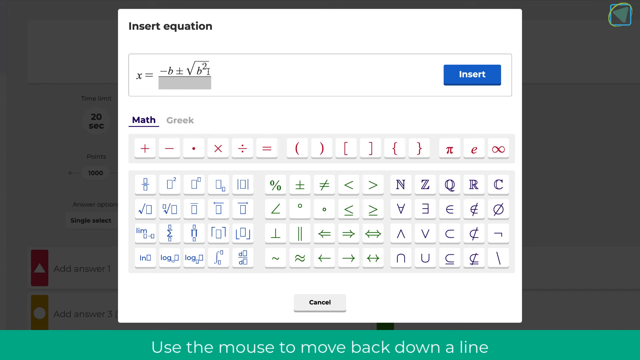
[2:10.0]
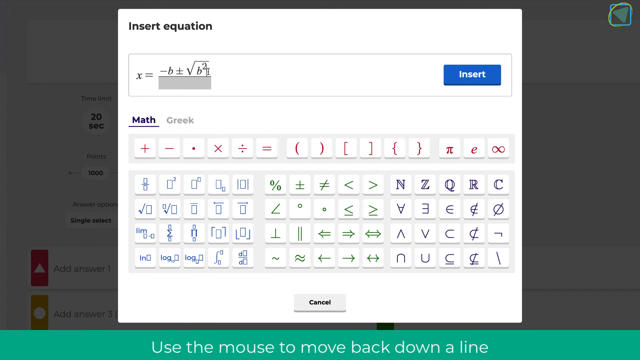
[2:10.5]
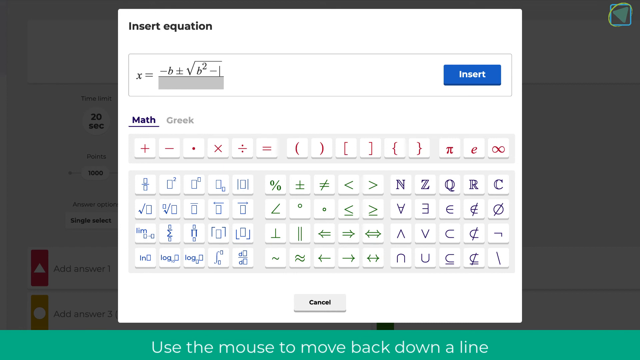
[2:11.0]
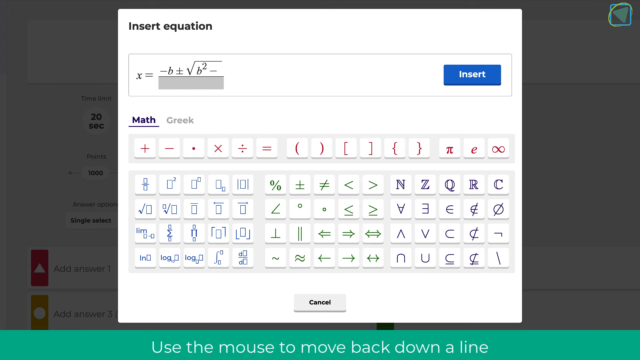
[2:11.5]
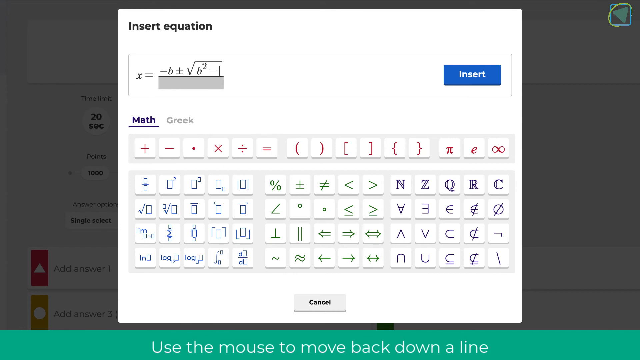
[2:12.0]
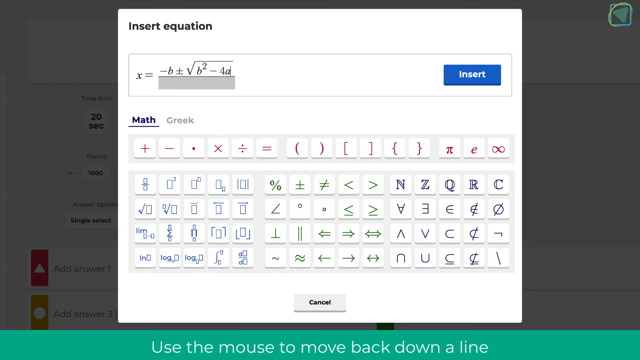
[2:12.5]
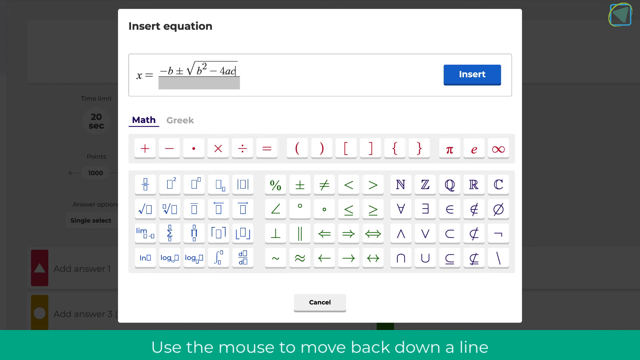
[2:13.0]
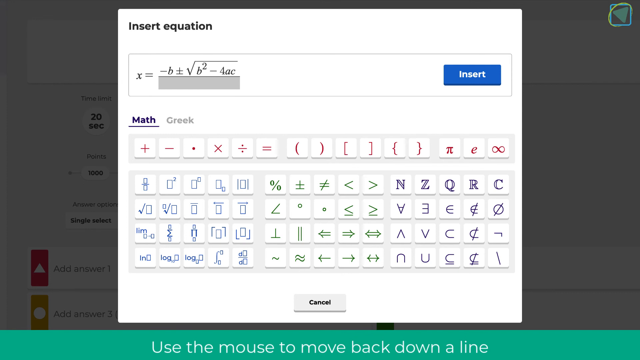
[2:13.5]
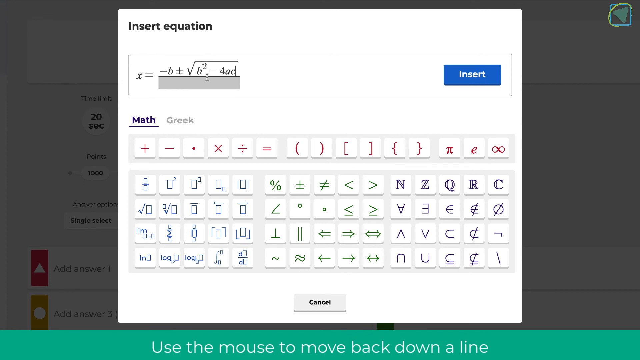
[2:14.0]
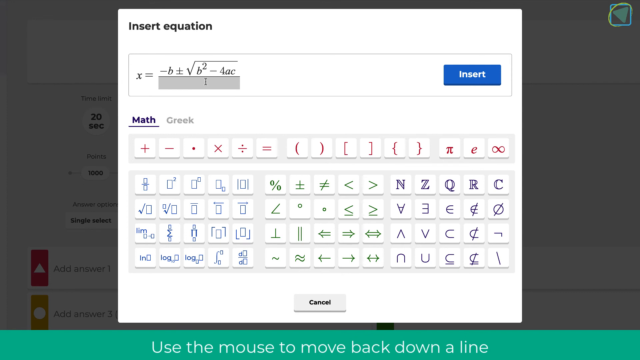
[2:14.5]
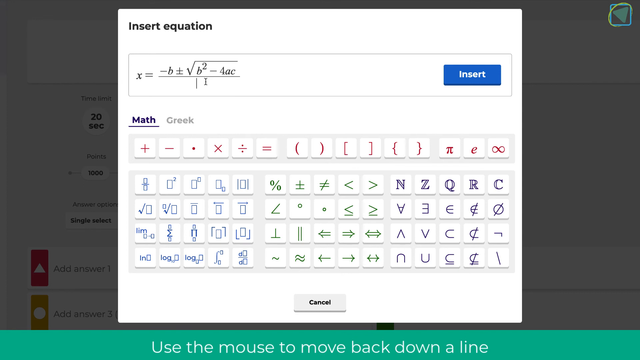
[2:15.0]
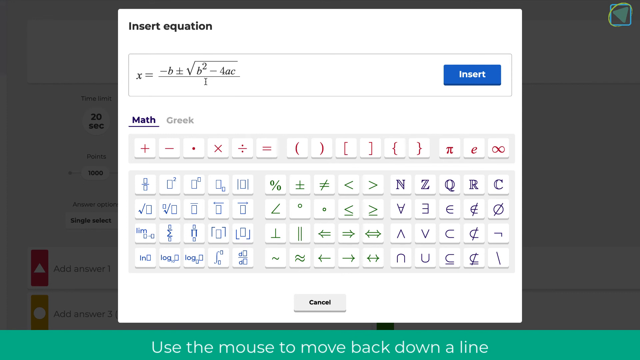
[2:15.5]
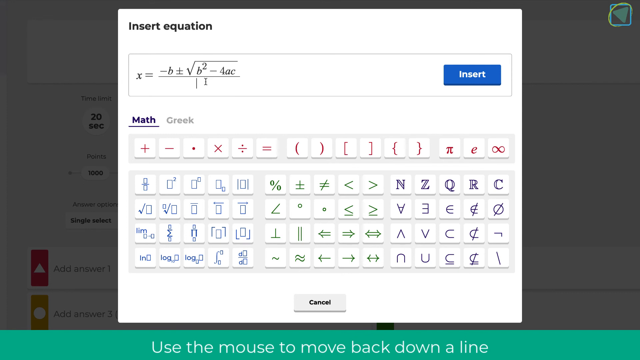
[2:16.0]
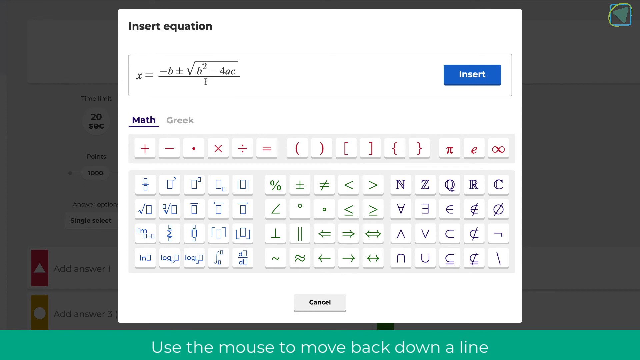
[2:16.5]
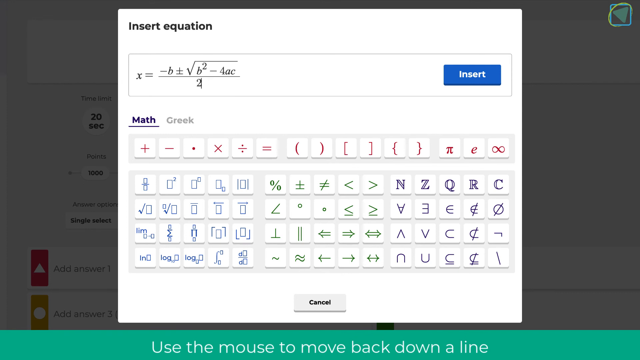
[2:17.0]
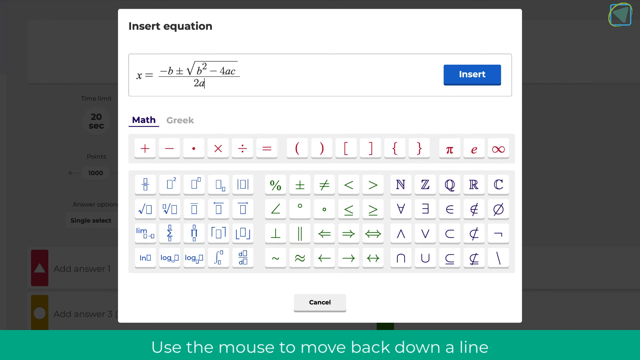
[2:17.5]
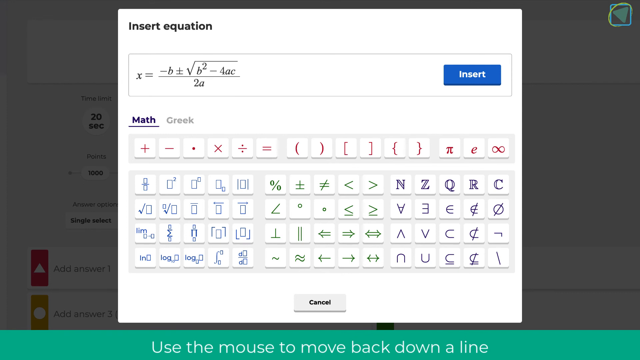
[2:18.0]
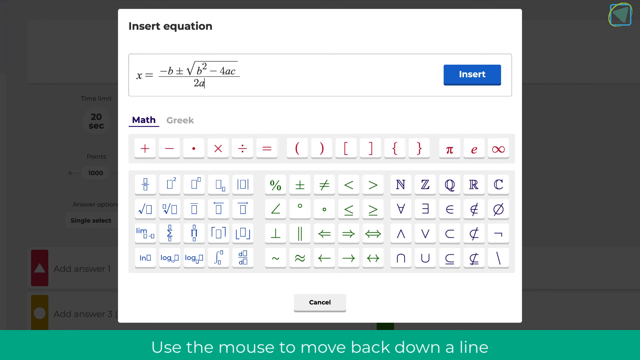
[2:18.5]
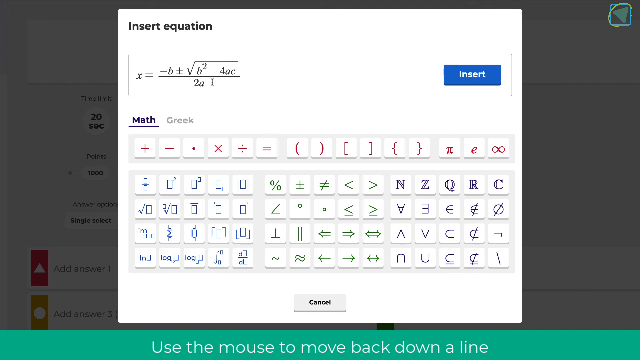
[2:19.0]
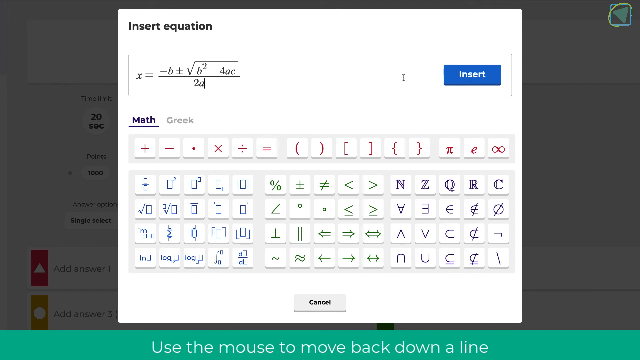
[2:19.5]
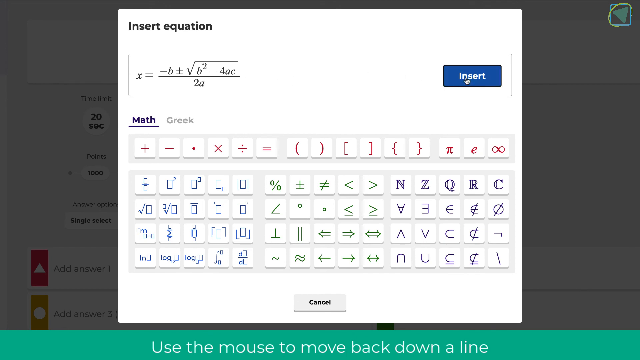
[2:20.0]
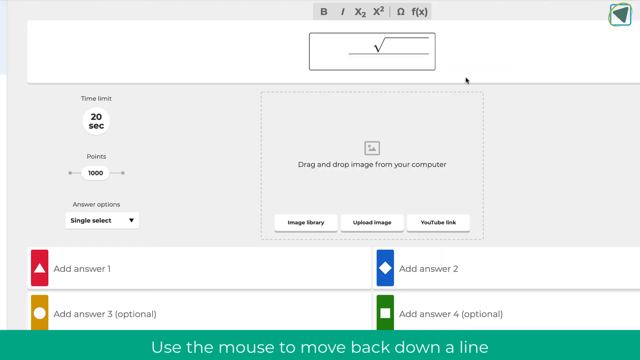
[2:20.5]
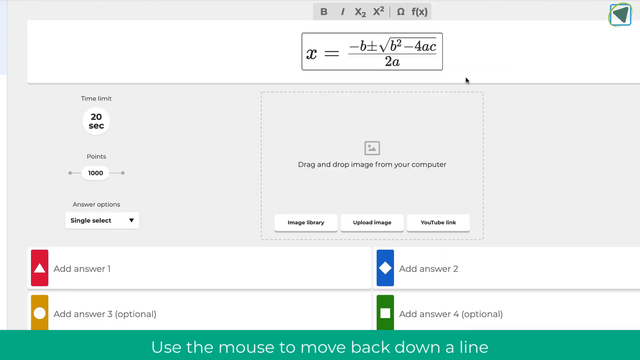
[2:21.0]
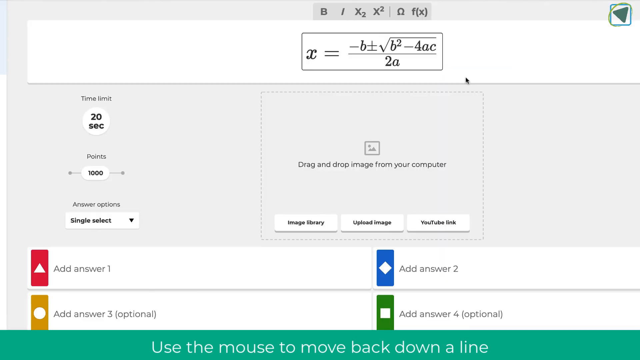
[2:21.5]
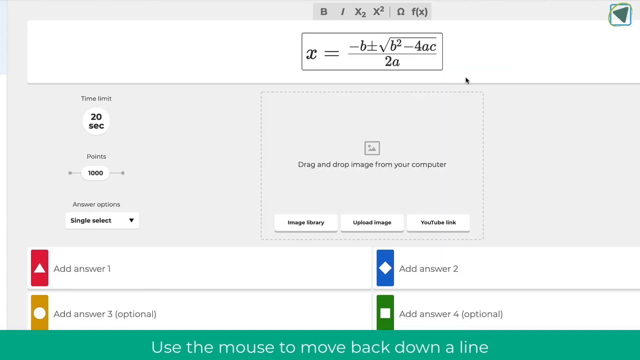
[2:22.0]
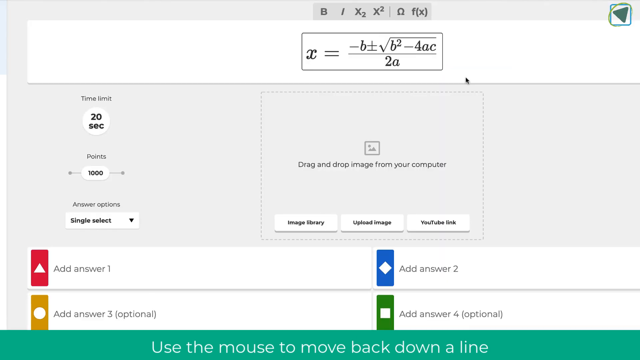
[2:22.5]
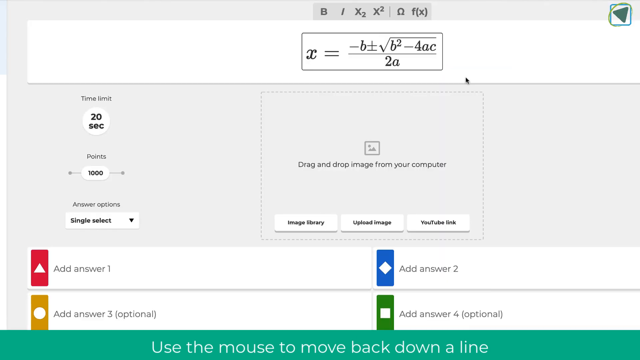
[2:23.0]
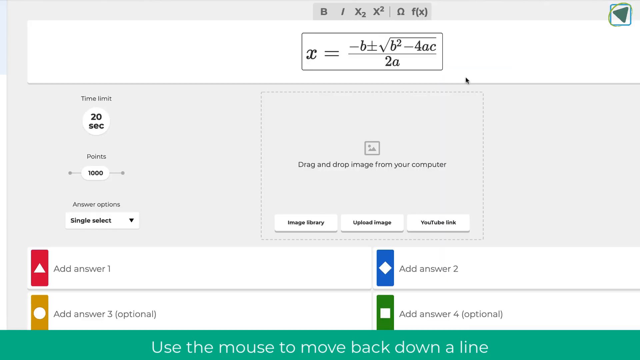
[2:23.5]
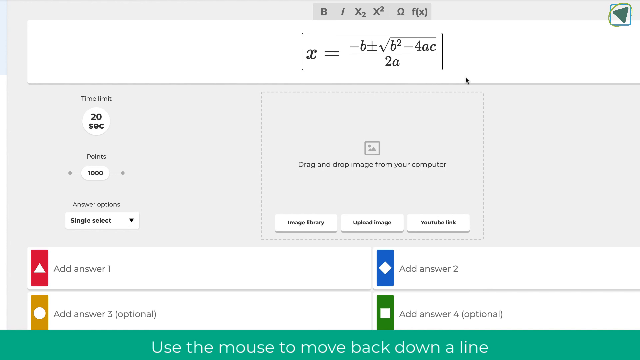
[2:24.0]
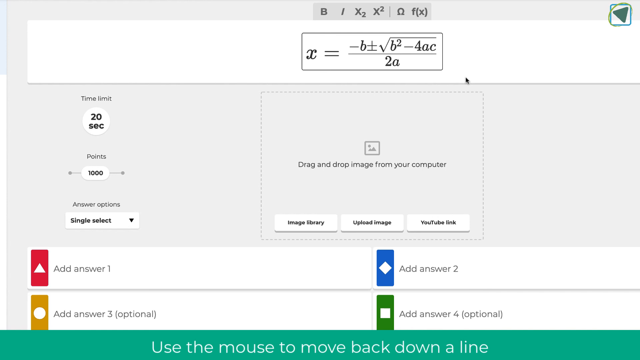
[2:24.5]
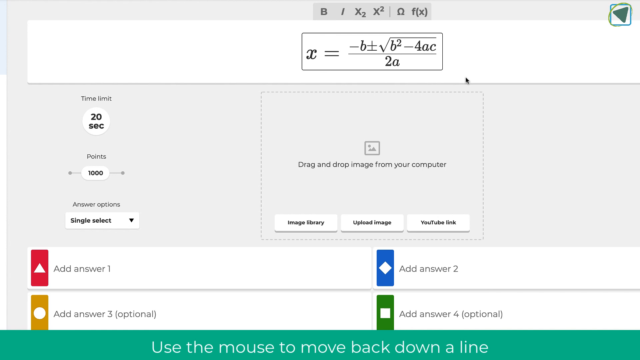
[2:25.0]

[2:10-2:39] In the equation editor, the user continues a much more complex equation than before. It starts with x equals, followed by a parenthesis, and a numerator of negative b plus-minus the square root of b squared. He adds a minus sign right after the b squared, then types the number 4 and the letters a and c, for 4 times a times c. He clicks the denominator and types the number 2 and the letter a. He then moves his cursor over to the insert button, which is blue with white text; the equation editor goes away and the equation becomes the title of his Kahoot. The mouse stays still for a moment, and then the screen goes completely white and blank for the last 10 seconds or so.